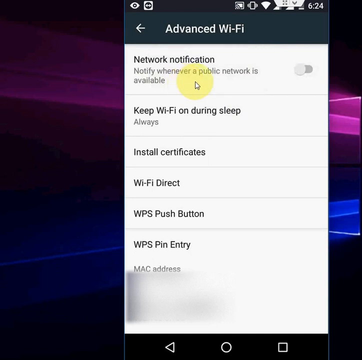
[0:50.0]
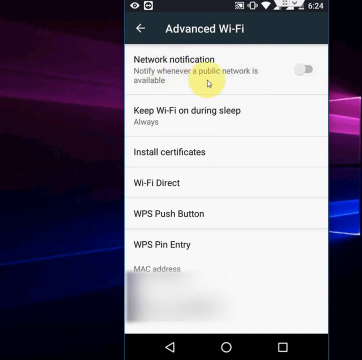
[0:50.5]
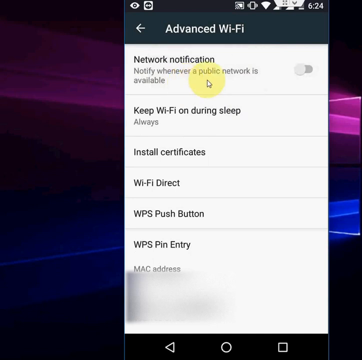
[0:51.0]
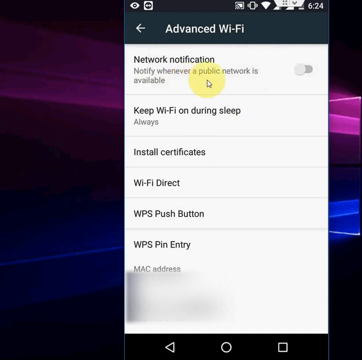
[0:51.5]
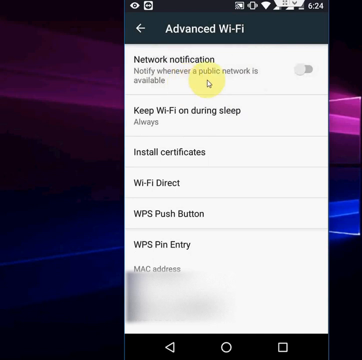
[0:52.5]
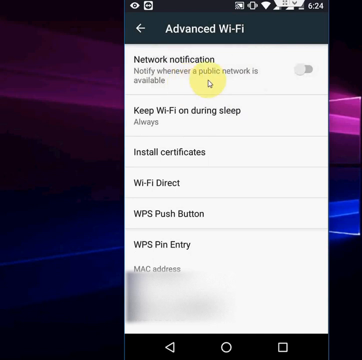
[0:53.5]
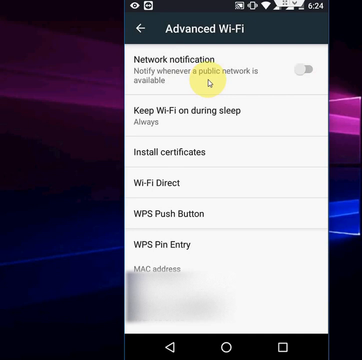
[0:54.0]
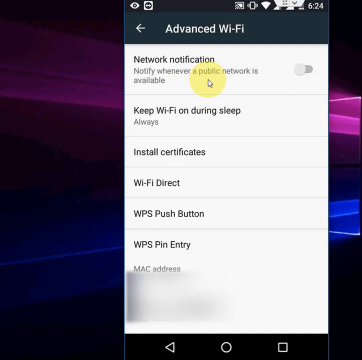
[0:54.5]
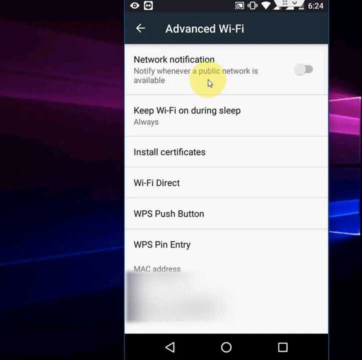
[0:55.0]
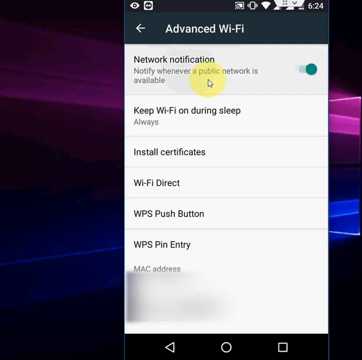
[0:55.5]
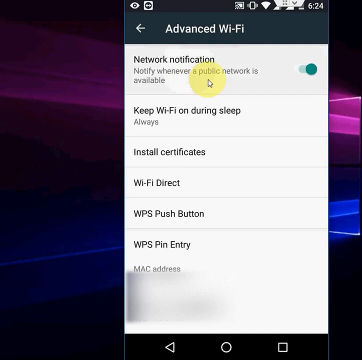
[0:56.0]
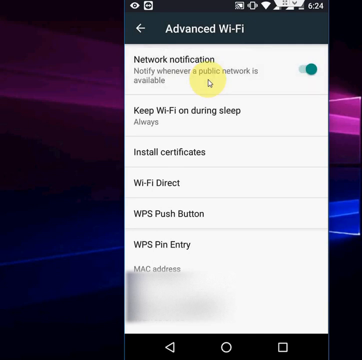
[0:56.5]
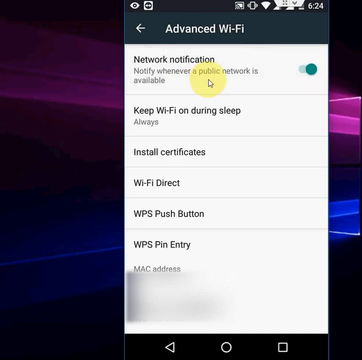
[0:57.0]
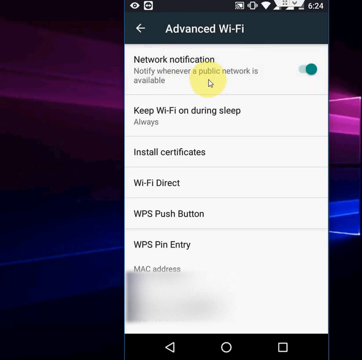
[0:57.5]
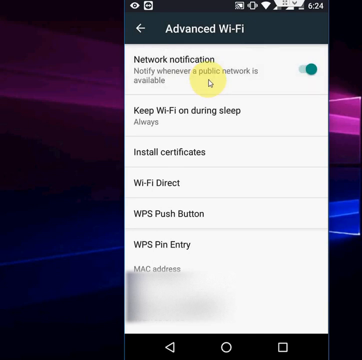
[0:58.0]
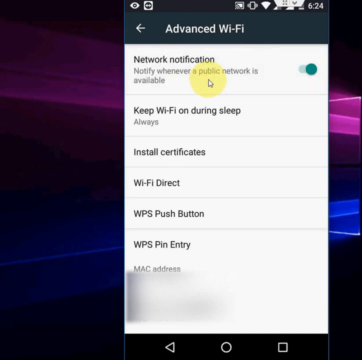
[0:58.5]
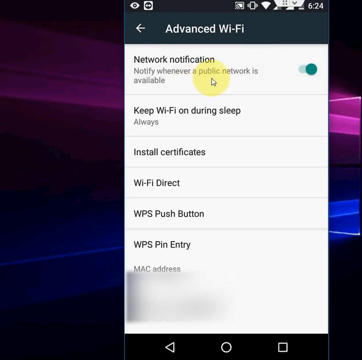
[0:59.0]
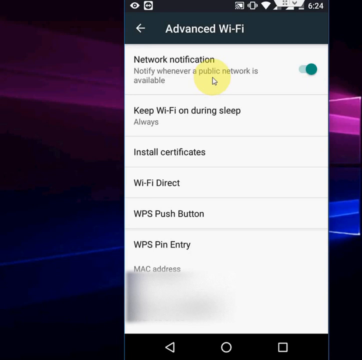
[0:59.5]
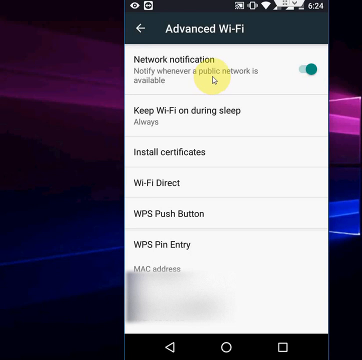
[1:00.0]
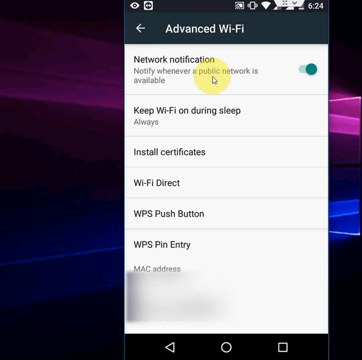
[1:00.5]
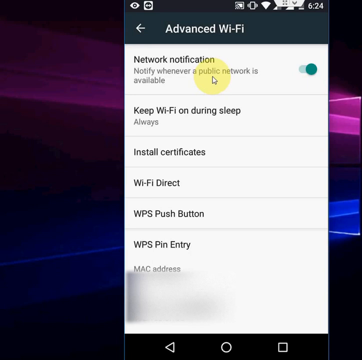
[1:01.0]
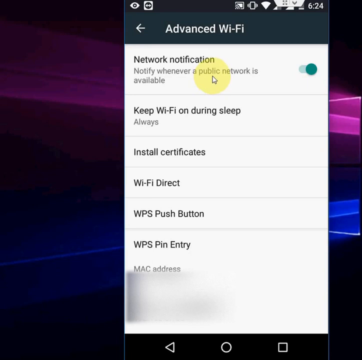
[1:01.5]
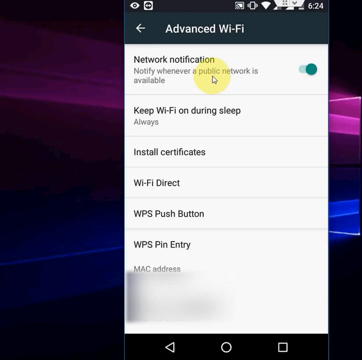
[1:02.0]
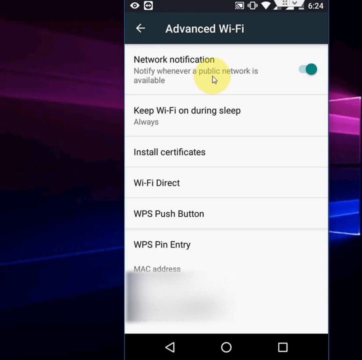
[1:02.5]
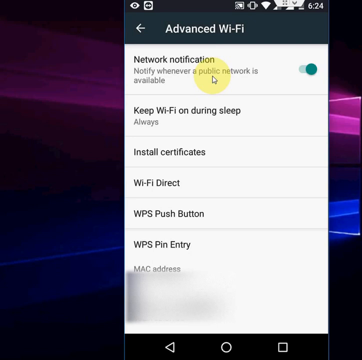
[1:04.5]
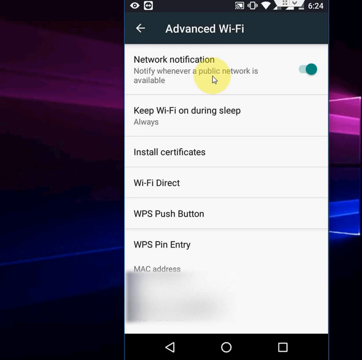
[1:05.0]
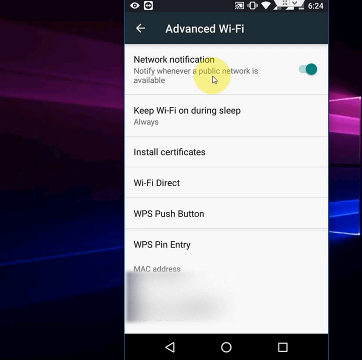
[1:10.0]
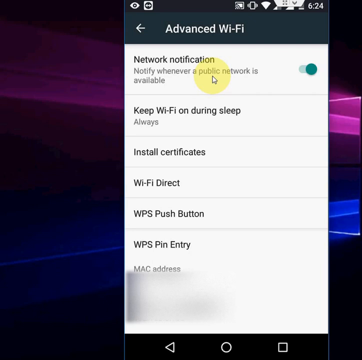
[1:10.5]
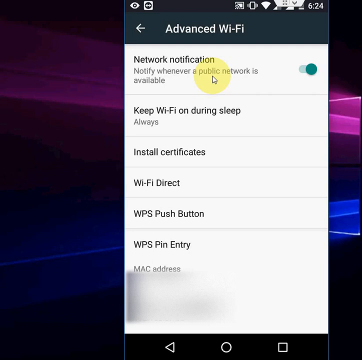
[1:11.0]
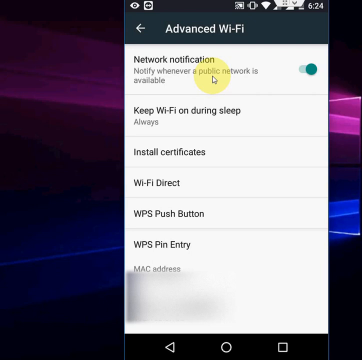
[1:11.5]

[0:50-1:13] In the advanced Wi-Fi settings, the network notification is turned off and then turned back on. The cursor hovers over it for a while and stays there, and then the icon is clicked again. Other icons are also on the page.